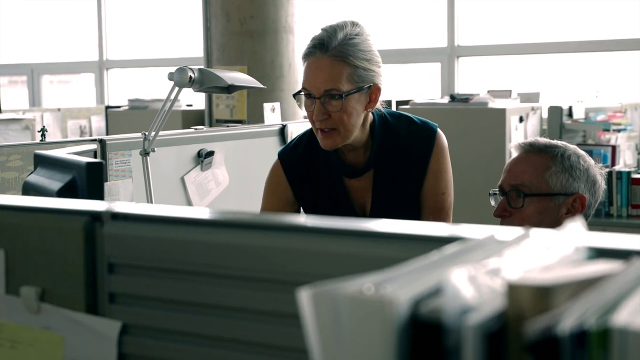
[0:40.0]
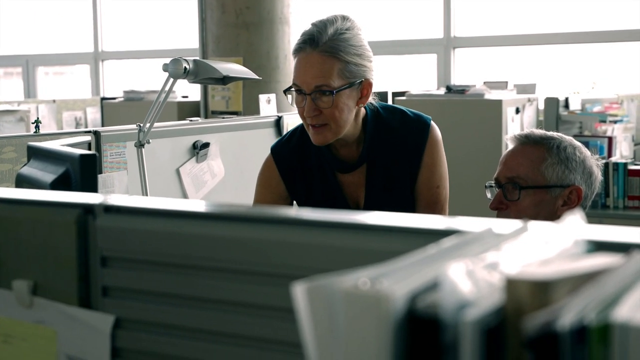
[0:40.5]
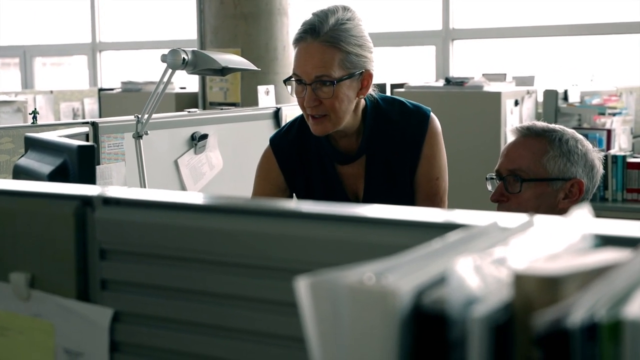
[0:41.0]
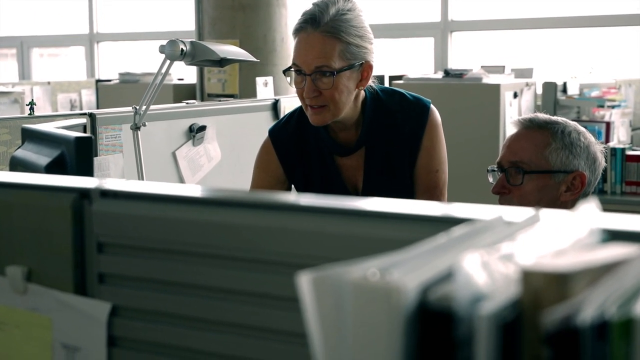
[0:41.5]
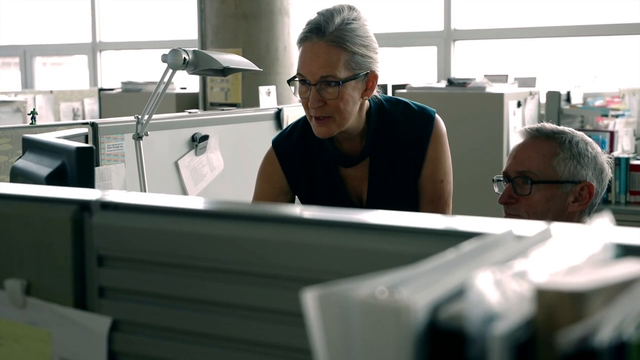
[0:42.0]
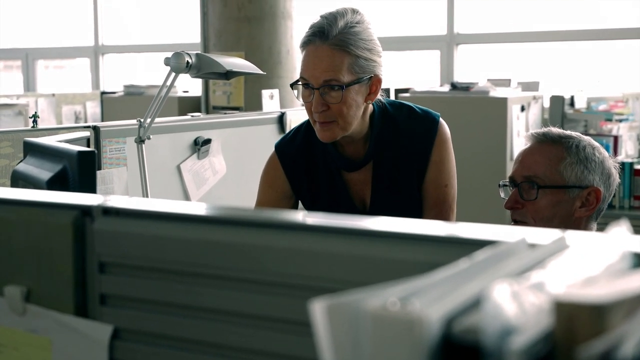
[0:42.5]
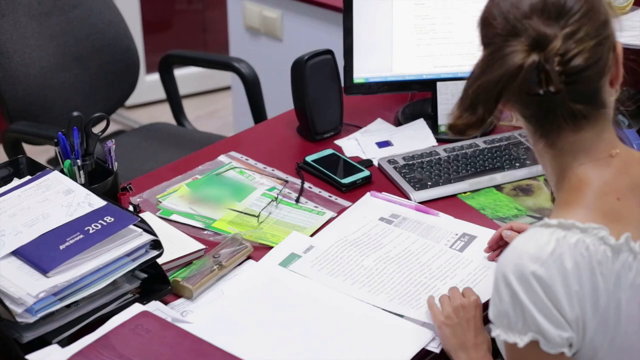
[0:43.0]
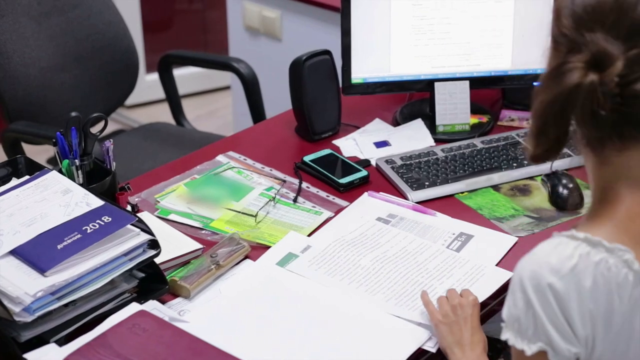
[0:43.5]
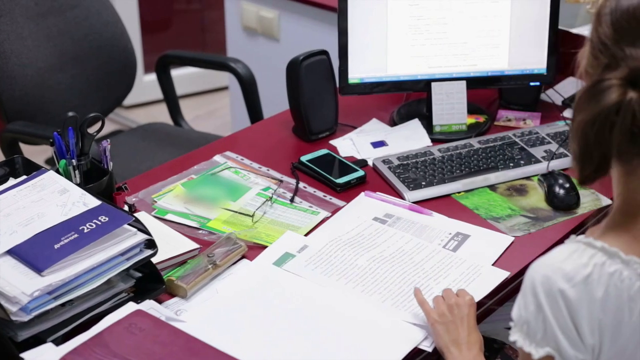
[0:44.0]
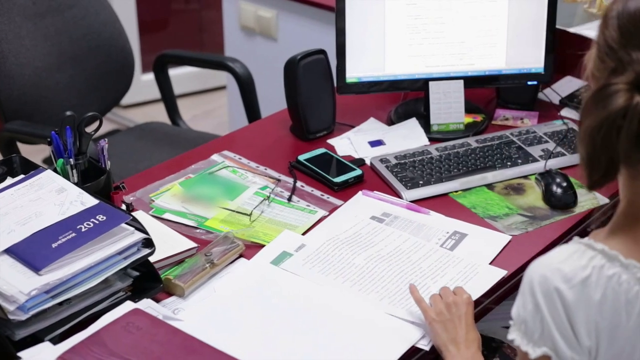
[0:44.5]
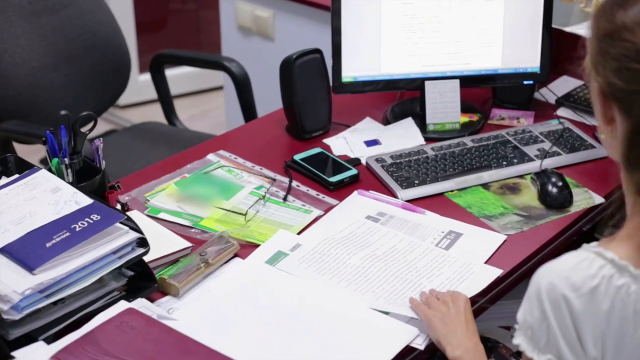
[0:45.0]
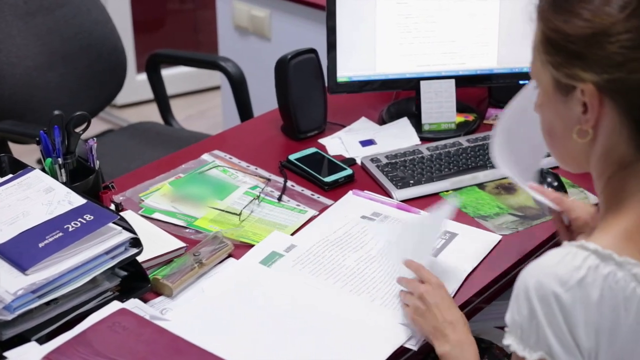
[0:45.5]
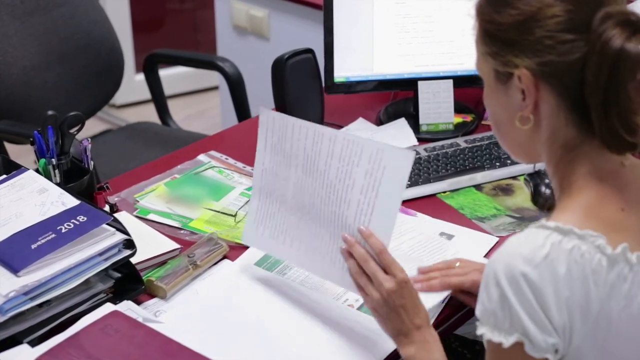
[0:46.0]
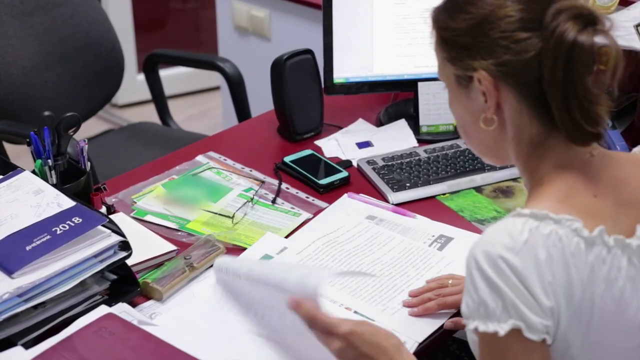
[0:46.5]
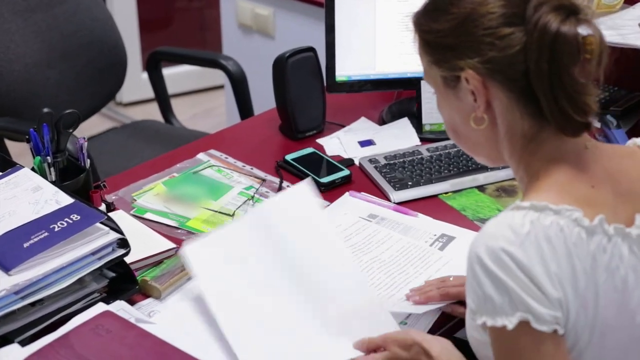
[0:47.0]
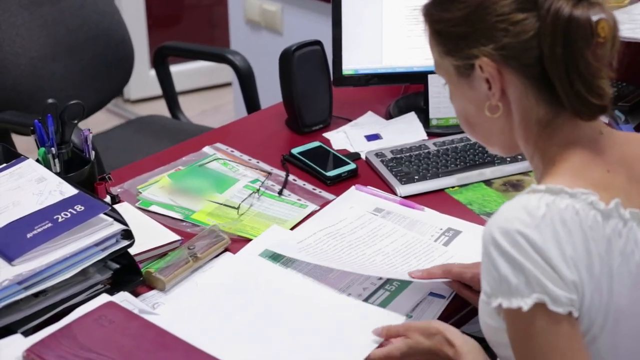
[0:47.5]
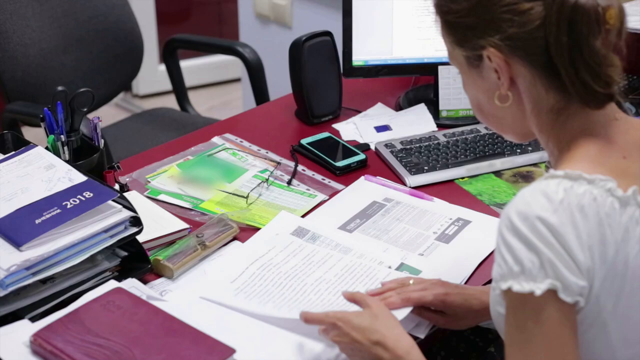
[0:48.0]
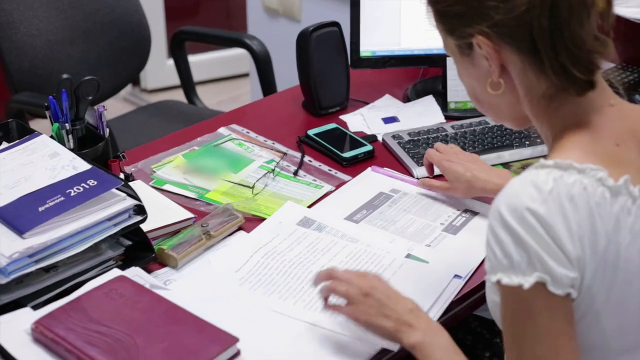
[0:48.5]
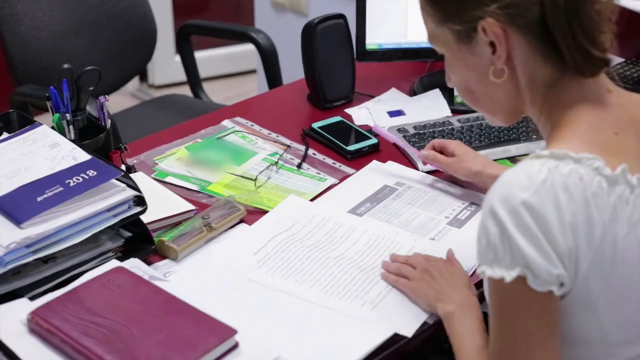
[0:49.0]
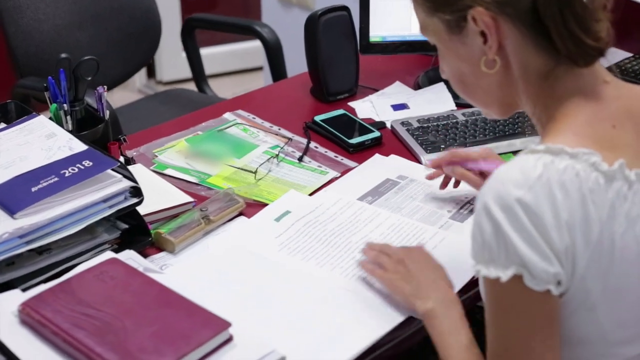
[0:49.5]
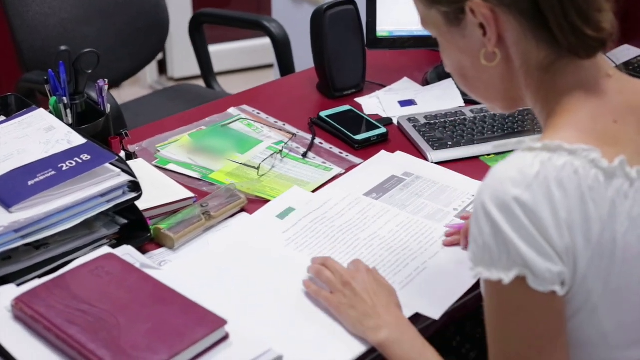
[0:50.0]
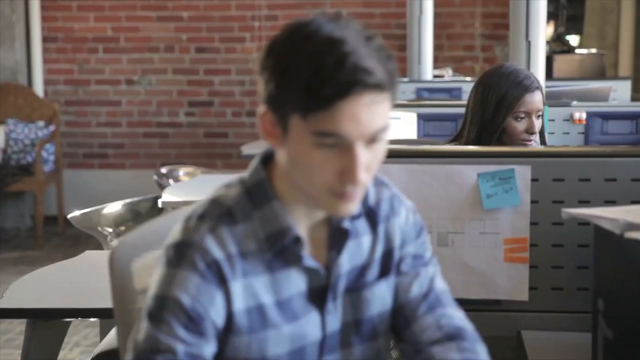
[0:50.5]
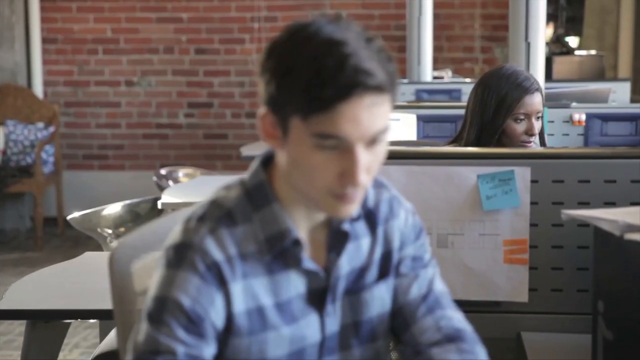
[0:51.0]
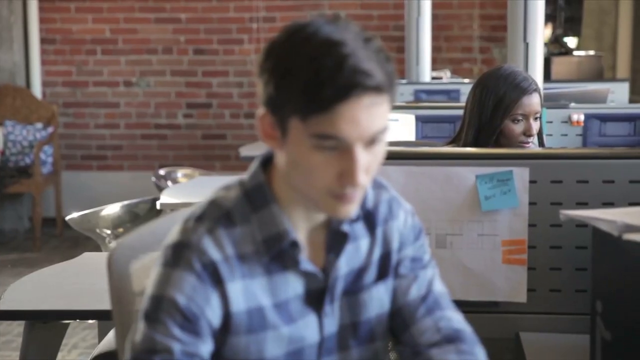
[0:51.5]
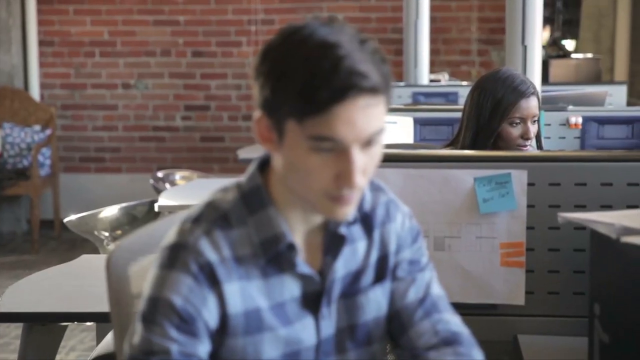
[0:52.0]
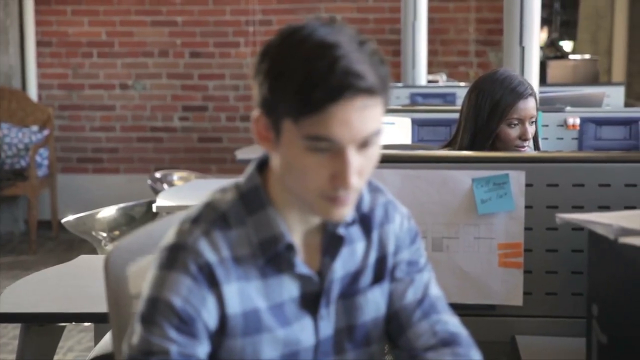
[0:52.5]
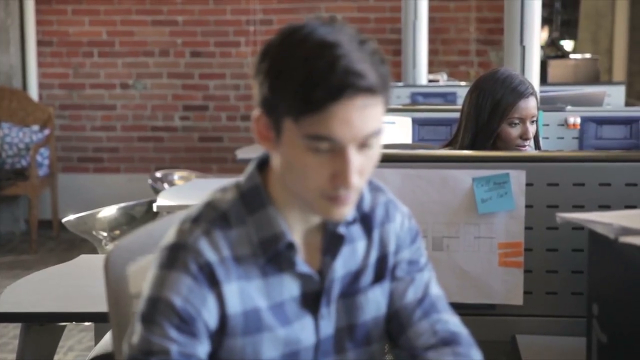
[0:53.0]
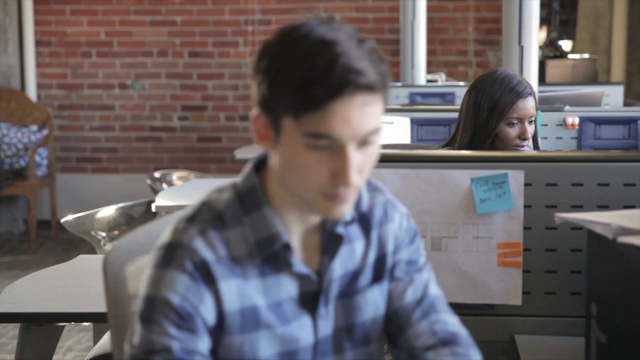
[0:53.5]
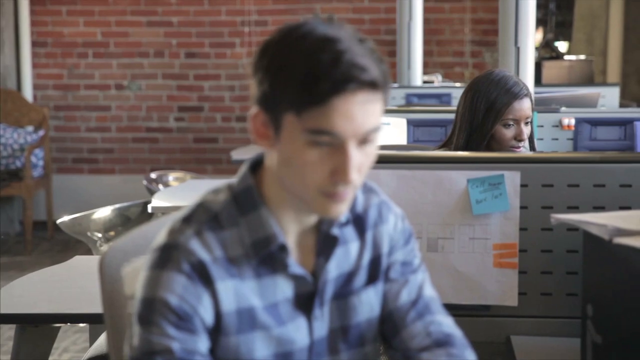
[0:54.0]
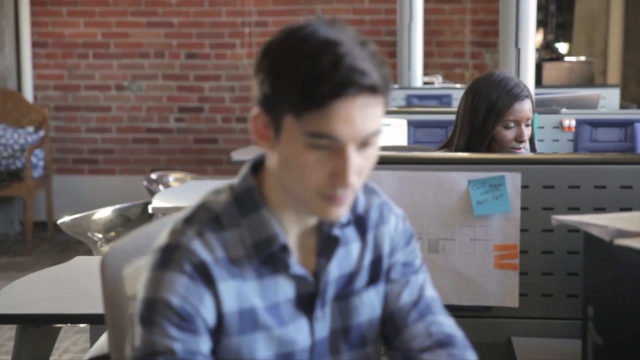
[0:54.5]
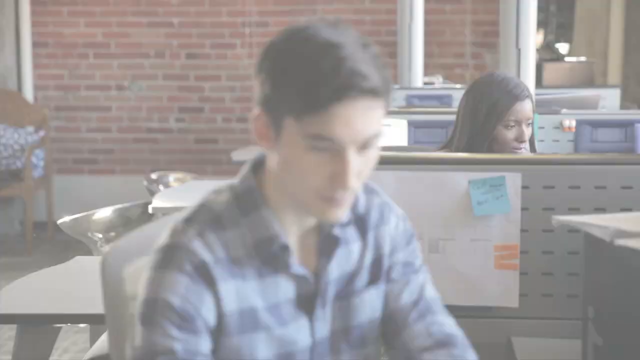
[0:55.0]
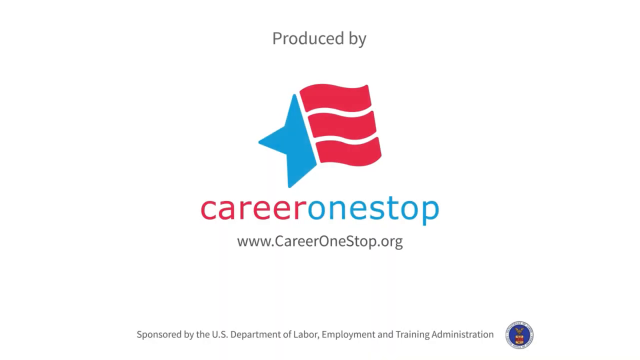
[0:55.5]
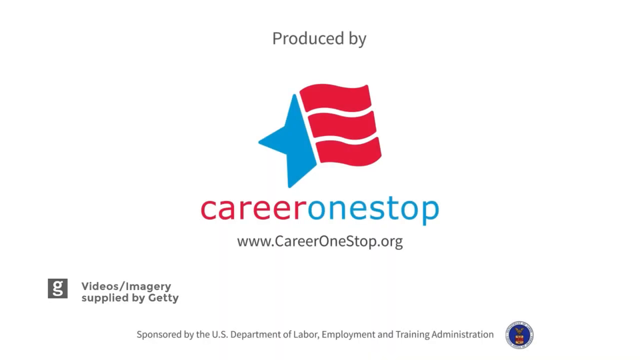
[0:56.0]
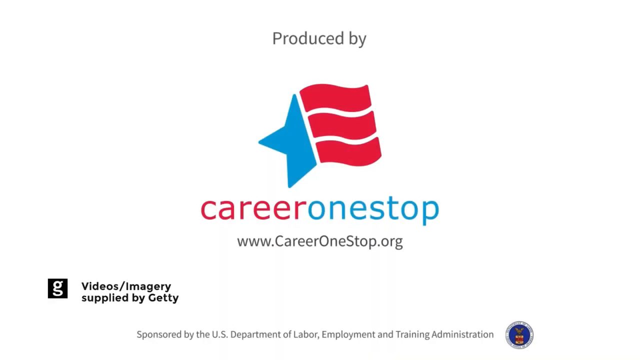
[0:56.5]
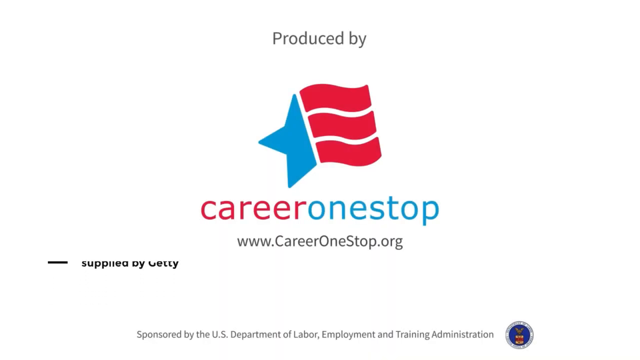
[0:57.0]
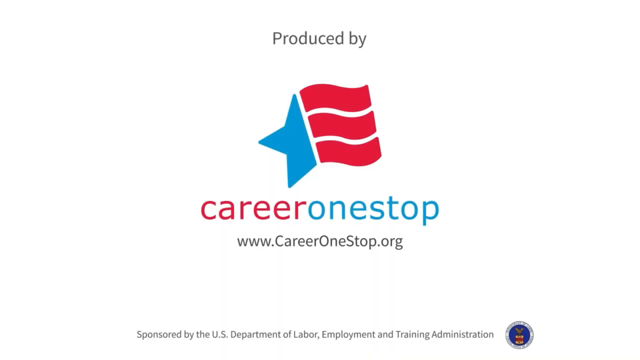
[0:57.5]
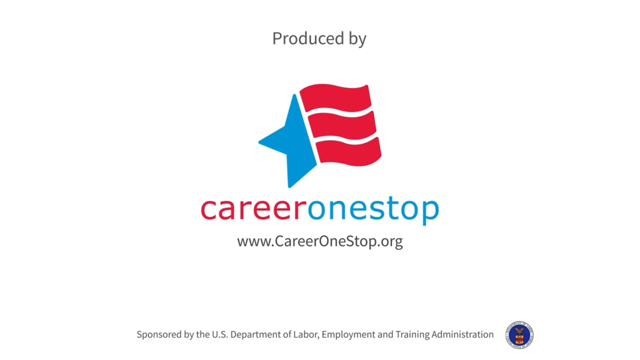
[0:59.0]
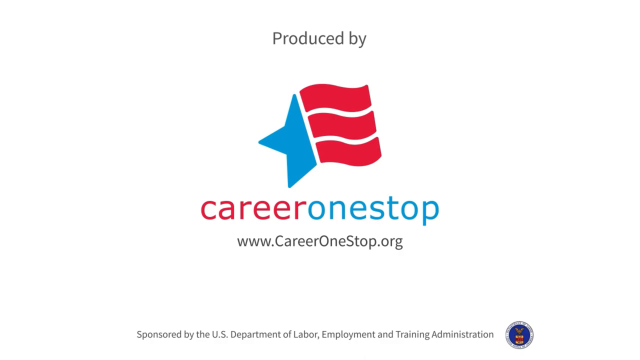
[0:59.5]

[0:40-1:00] The papers and files in the background are less visible than the two people in front, whose bodies cannot be seen because a side of a cubicle, kind of white or gray, blocks them. Next, a woman sits in front of her desk, which has a keyboard, a mouse, another monitor and a lot of papers. She wears a white shirt and hoop or circular earrings, and her hair is tied back in a bun, leaving the back of her neck visible. She touches some papers, holds a paper with her left hand, places it back down, flips it, places another paper over it with her right hand, and then holds a pen and switches it around. The ending shows a person sitting down with a woman behind him in a cubicle setting. There are a couple of sticky notes on the man's cubicle, and the man looks fairly young. The end screen is a white blank background that says "produced by career one stop www.careeronestop.org".